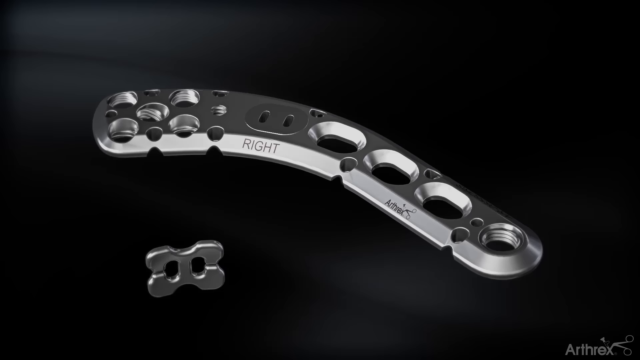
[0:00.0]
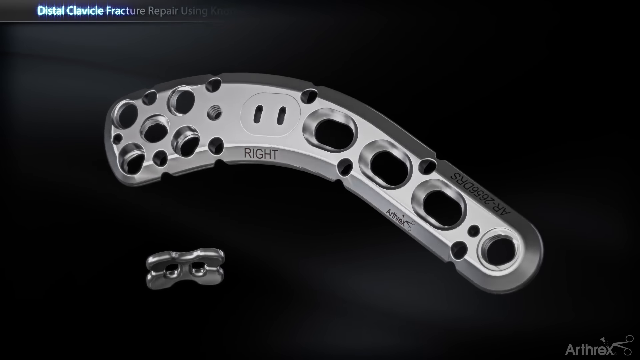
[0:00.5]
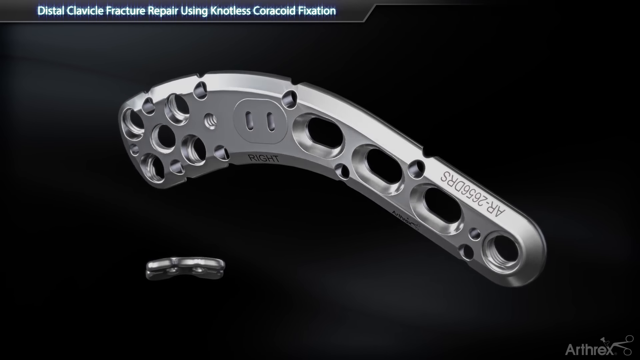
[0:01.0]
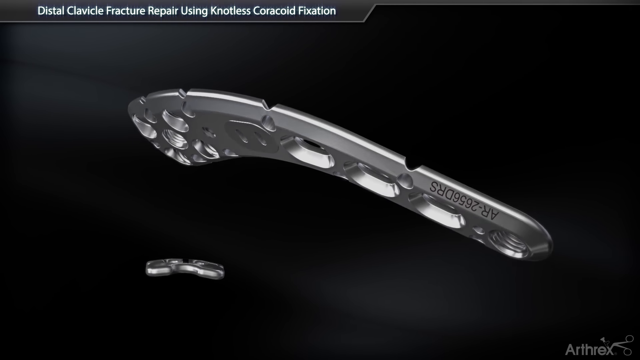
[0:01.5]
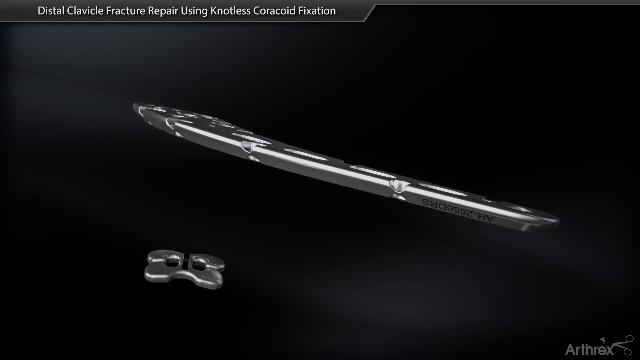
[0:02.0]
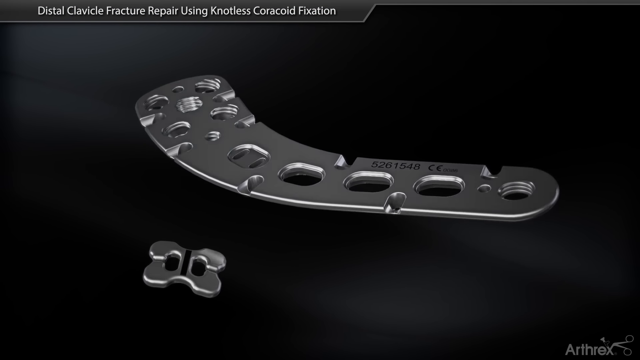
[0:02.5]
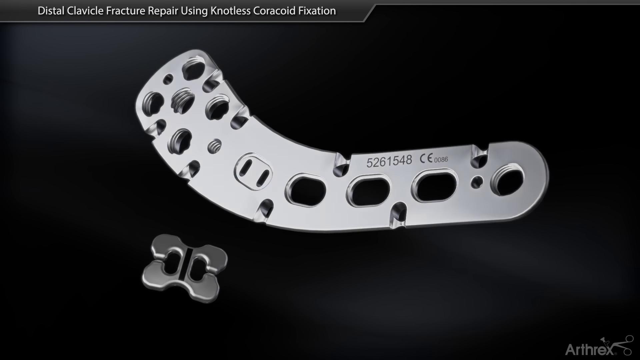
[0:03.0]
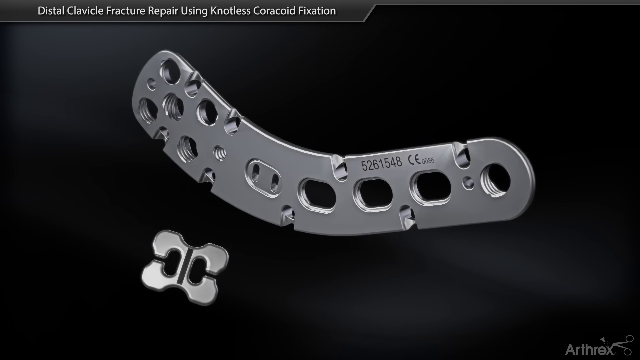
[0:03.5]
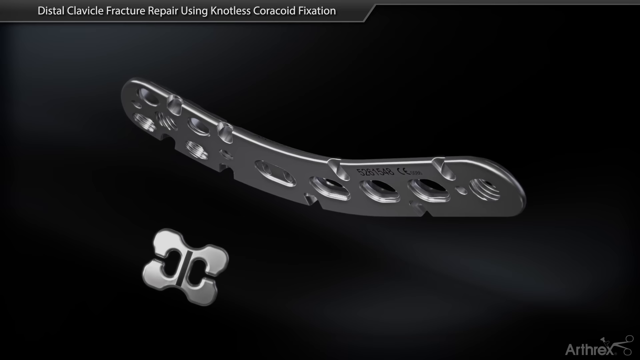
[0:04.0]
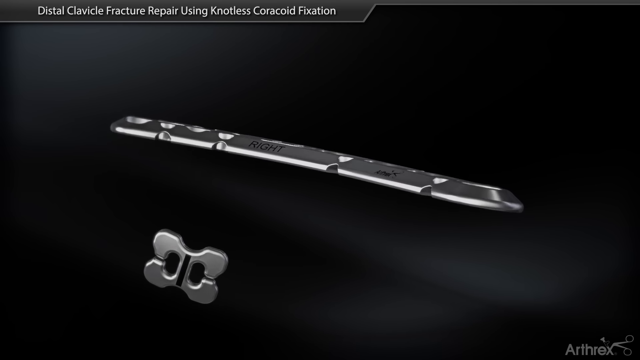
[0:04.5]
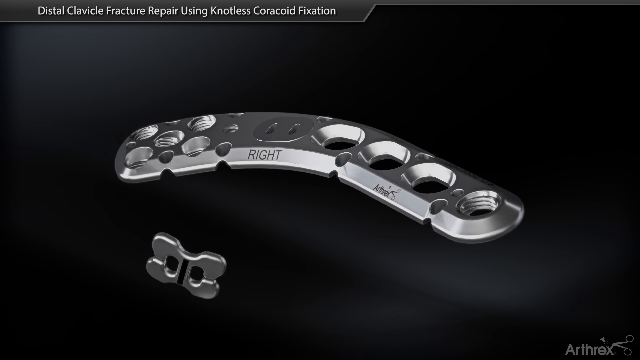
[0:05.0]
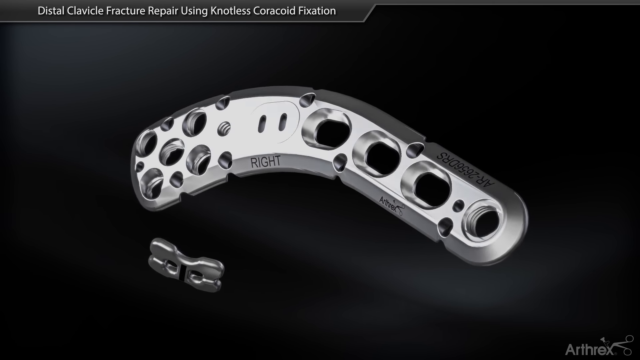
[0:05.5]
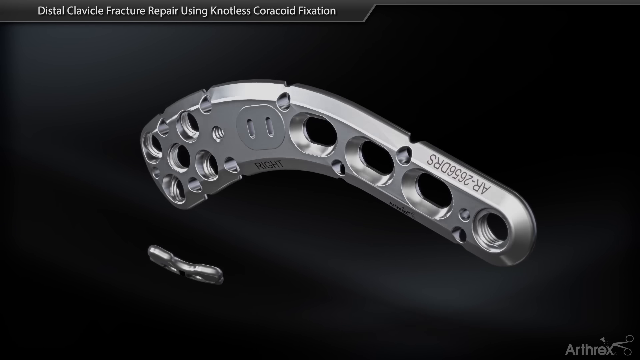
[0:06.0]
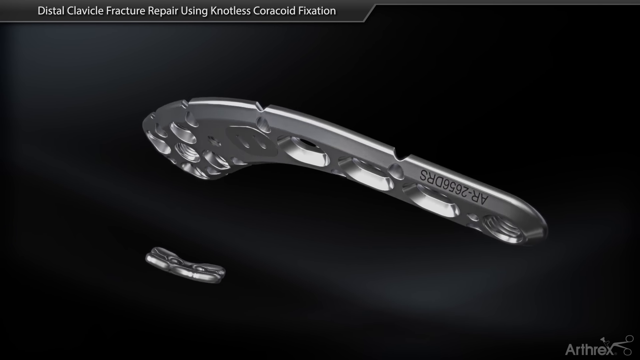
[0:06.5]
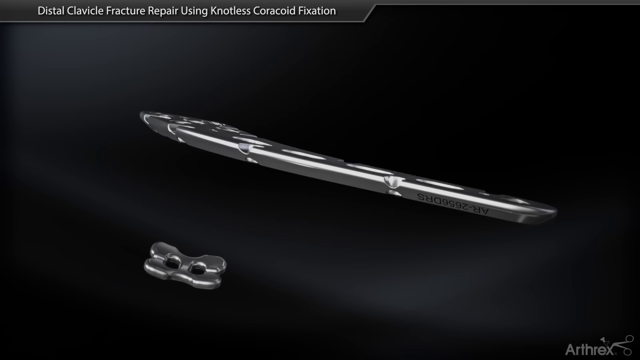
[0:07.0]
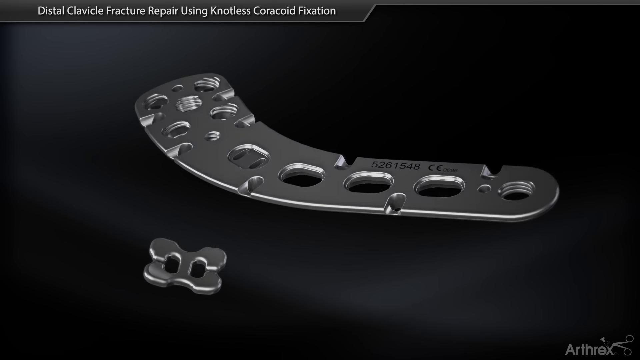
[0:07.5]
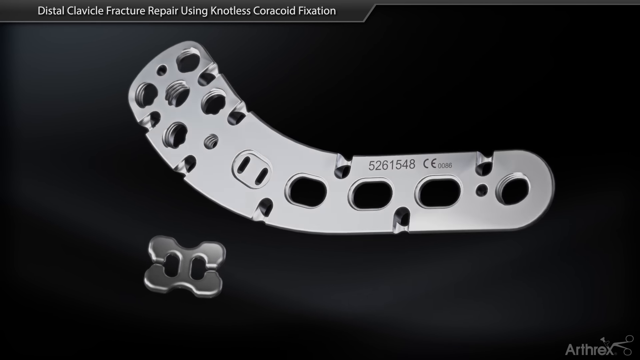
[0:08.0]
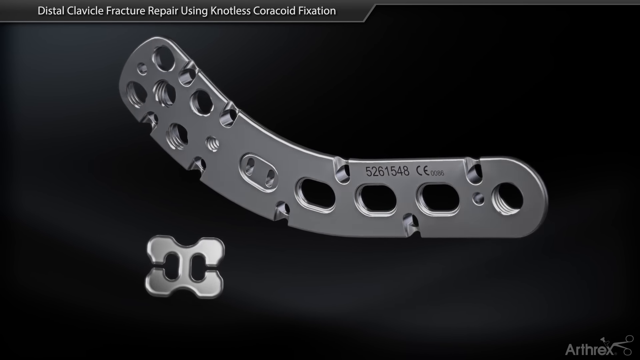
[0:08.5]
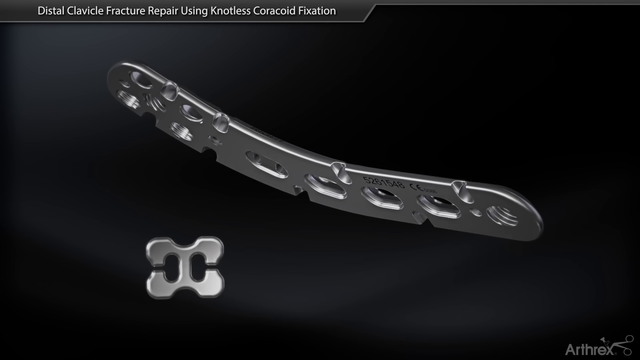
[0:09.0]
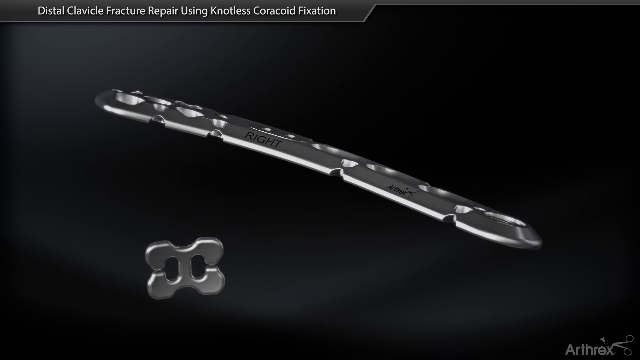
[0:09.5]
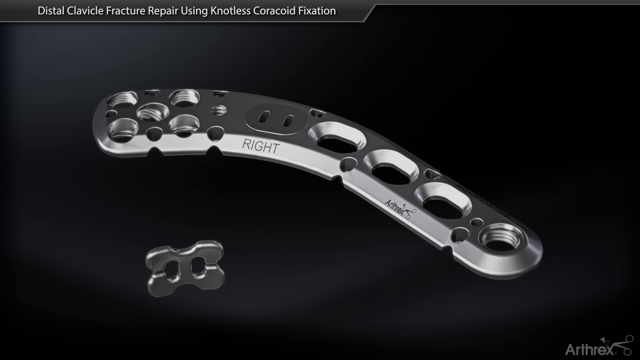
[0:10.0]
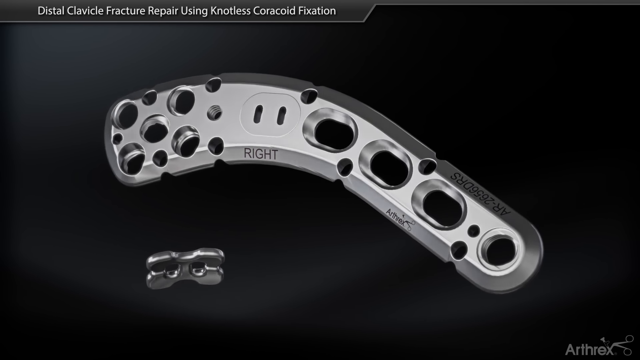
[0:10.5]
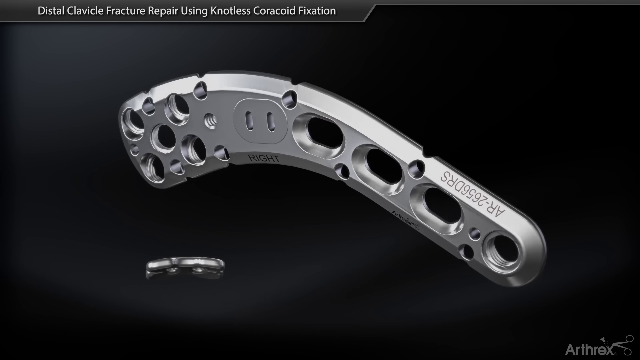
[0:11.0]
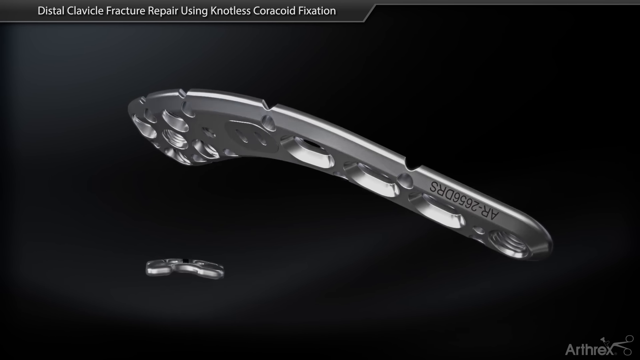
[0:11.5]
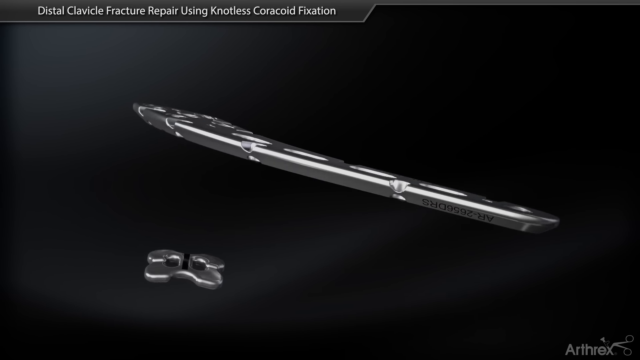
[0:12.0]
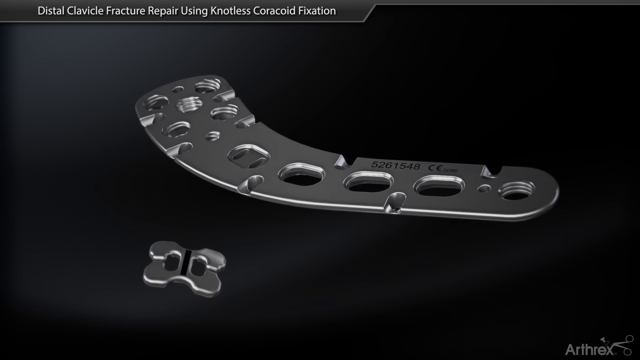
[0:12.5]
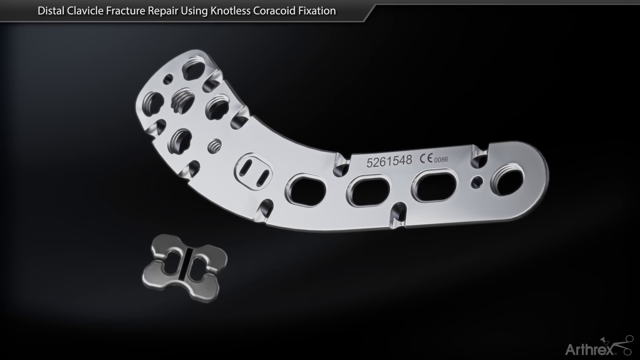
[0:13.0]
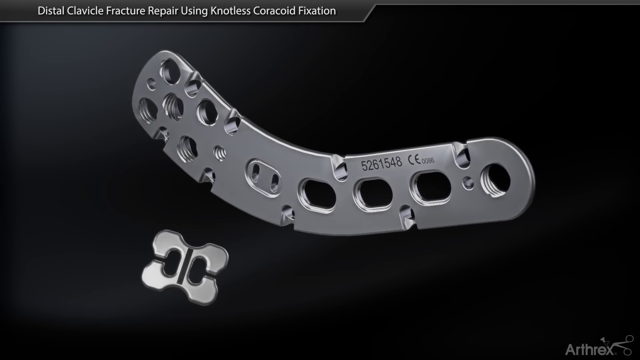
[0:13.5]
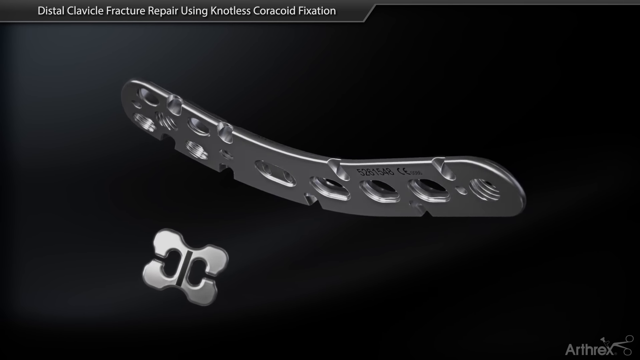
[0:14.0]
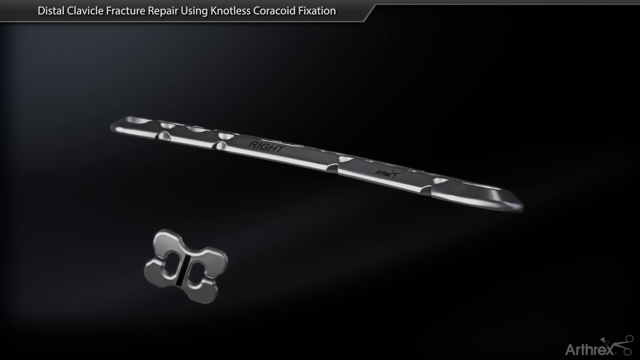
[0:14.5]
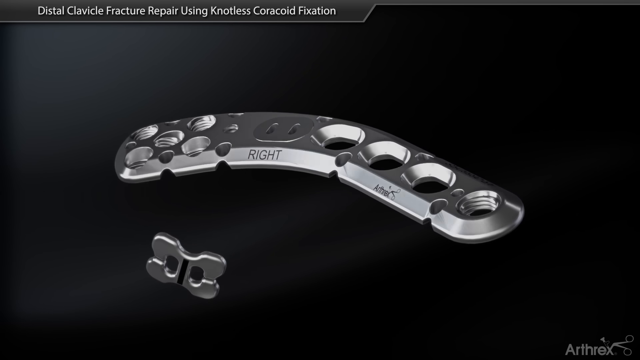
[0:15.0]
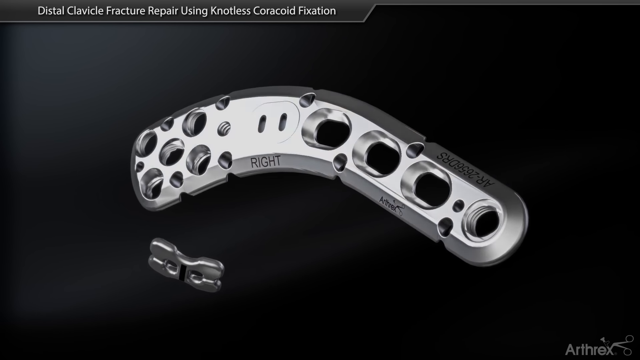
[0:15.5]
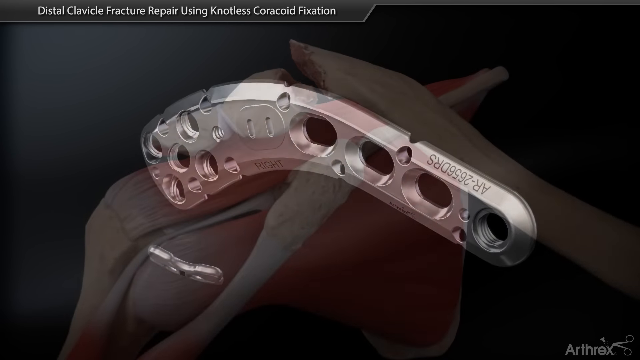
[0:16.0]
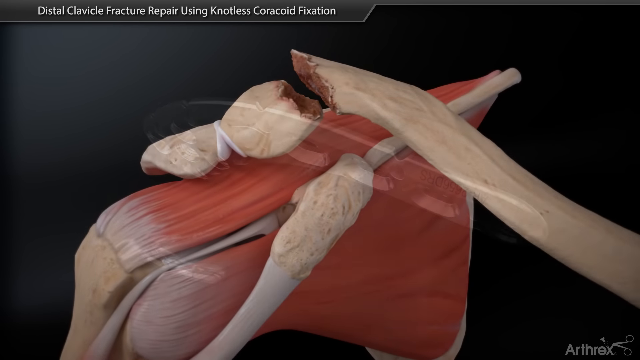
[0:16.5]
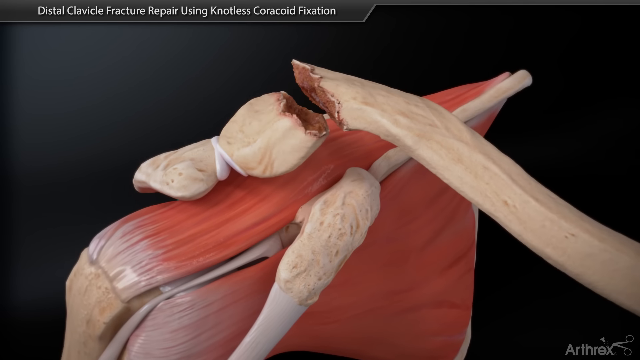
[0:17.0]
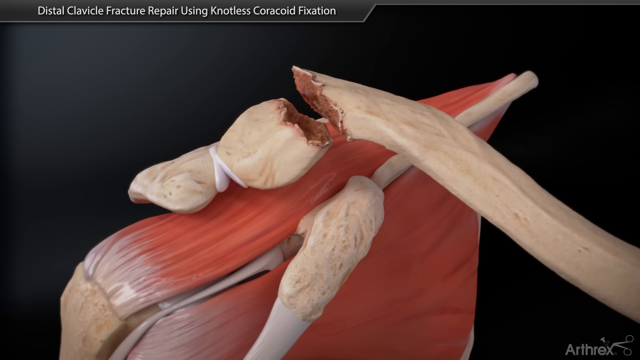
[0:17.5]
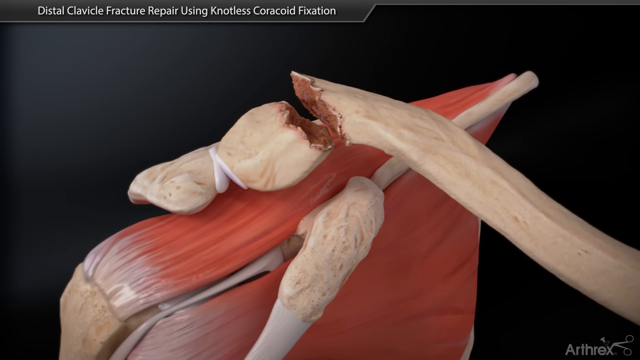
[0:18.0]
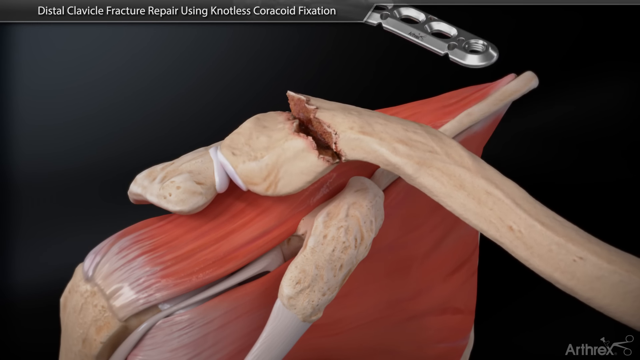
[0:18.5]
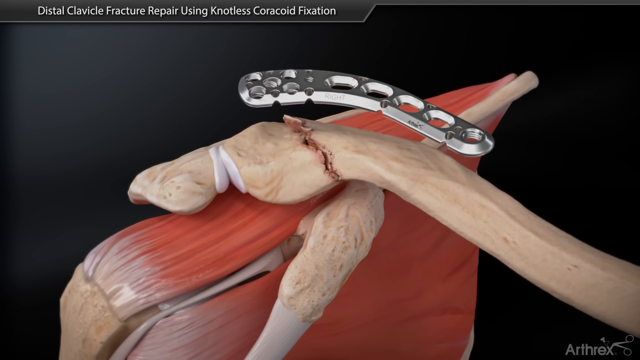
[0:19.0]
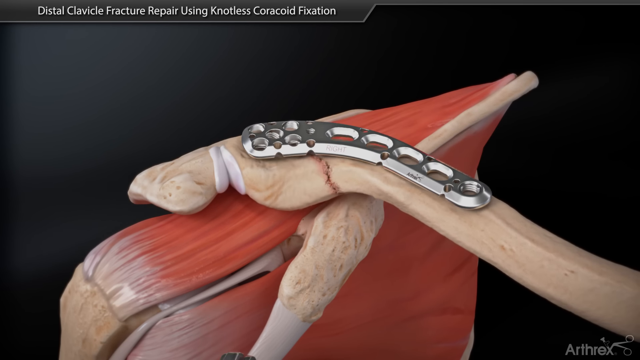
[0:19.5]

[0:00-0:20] The video starts with a black background. In the center is a piece of metal that begins about 2 inches from the top on the left side and 2 inches from the left side, goes right to about the midway point, and then angles down to about 2 inches from the bottom right corner. It has 5 big holes on the left side, 1 big hole at the end, 2 off to the side and 1 in the center, then 2 little slits in the middle, another smaller hole up to the right, and down to the left of that 3 oblong holes and another circular hole at the right end. At the bottom center on the front it says "right", and on the top right, upside down, is a serial number. Below this is another piece of metal that is straight in the middle with a piece pointing off the top, giving it almost a four-leaf clover look. As it rotates down and comes back around, the back side also shows a serial number. Across the top, about halfway, a little rectangle reads in blue lettering "distal clavicle fracture repair using knotless coracode fixation". The pieces keep rotating and then vanish. A long, slender piece of bone comes in from the bottom right corner and extends just past the midway point. Down to the left of it, after a little gap, is another piece of bone about six inches long that is broken there. Below it is a big chunk of pink muscle, and in the middle of that, on the front side, a bone goes down to the left. The view slowly zooms in as the bone goes together. When the bone comes together, the piece of metal comes down from the top of the screen to touch it, apparently to hold it in place while the bone heals.